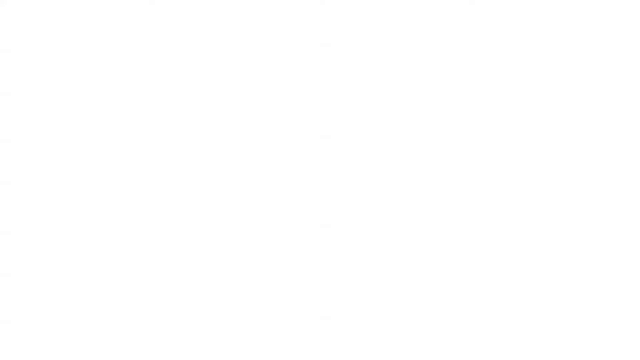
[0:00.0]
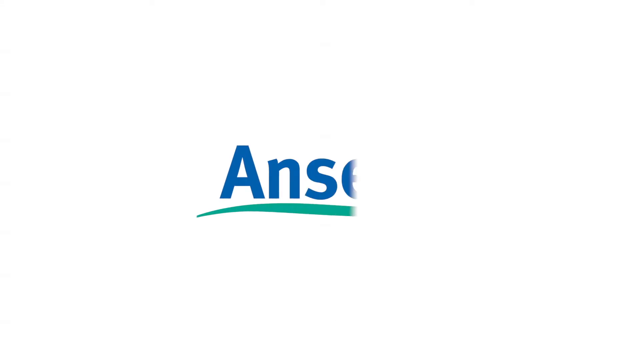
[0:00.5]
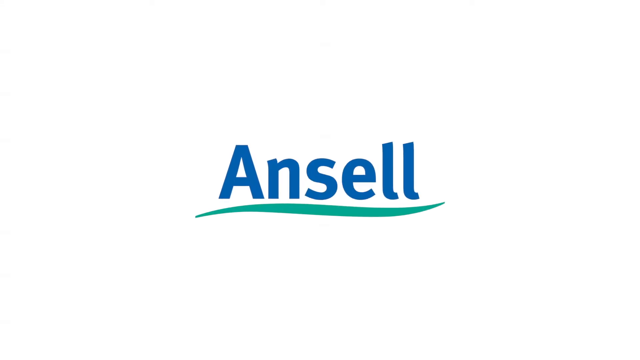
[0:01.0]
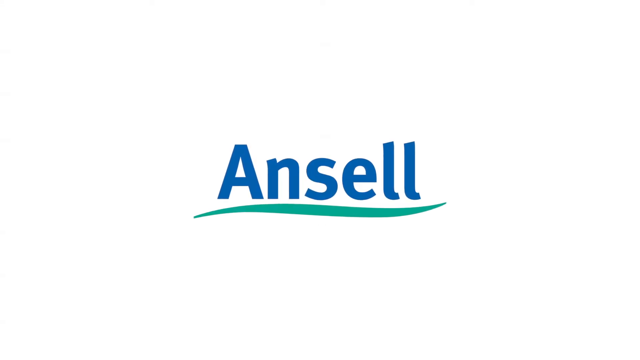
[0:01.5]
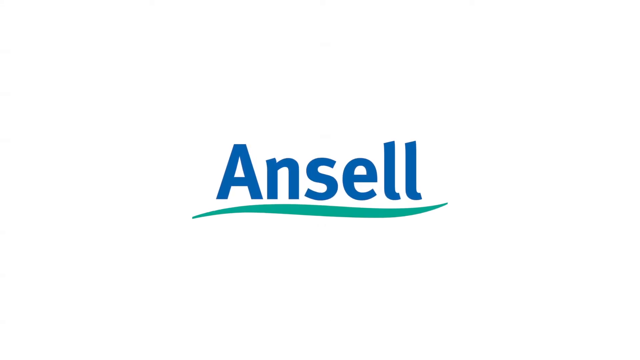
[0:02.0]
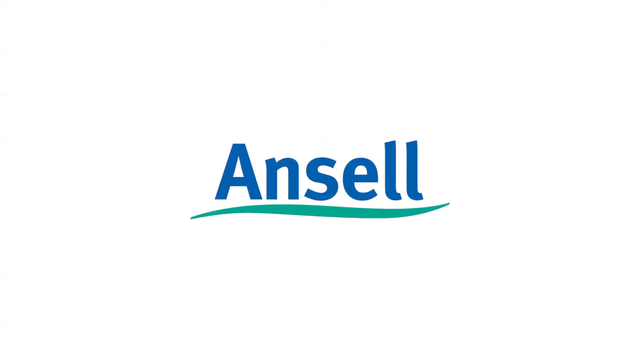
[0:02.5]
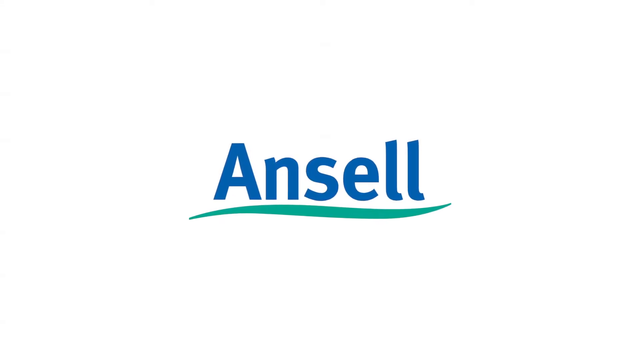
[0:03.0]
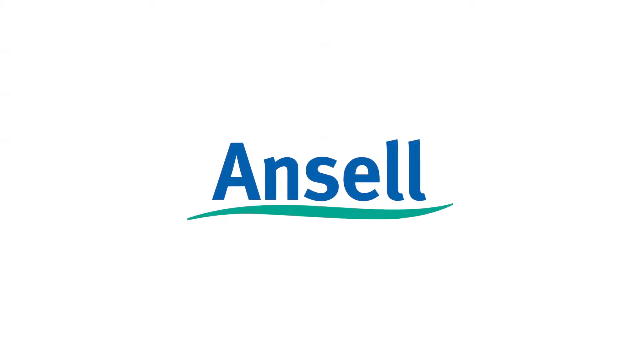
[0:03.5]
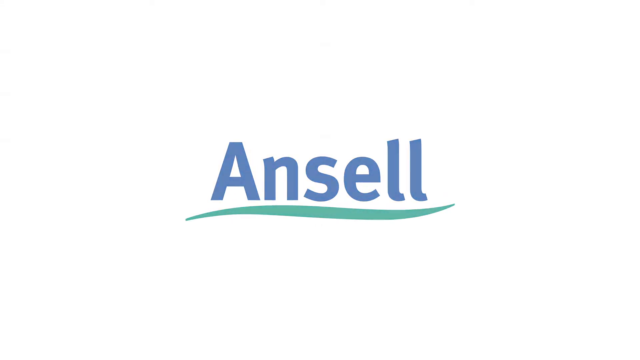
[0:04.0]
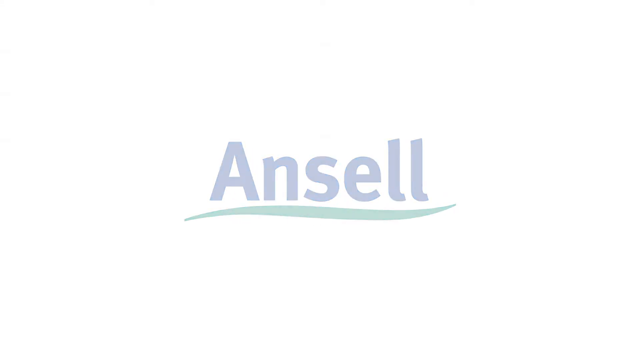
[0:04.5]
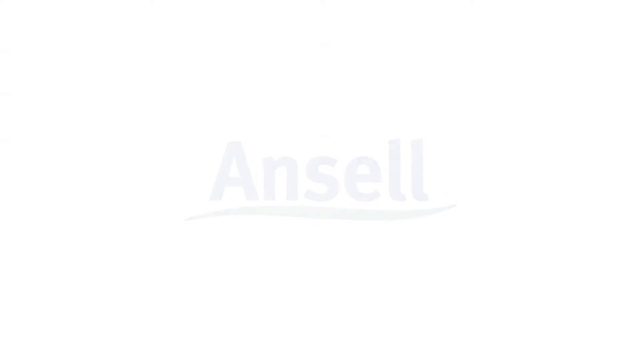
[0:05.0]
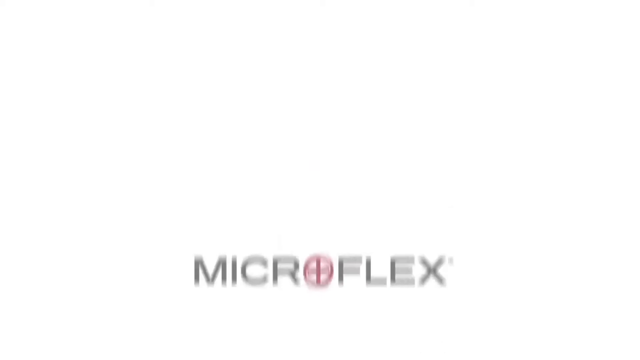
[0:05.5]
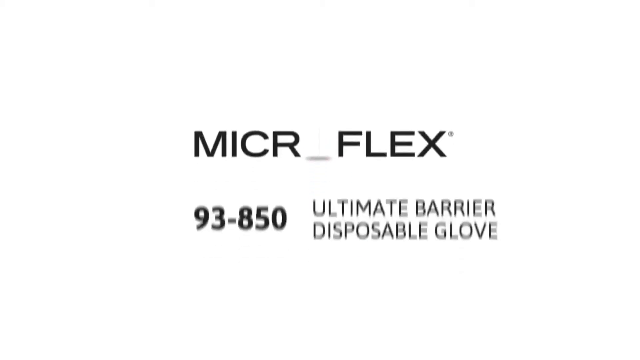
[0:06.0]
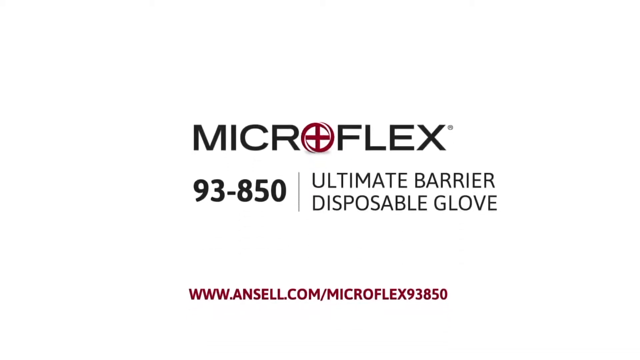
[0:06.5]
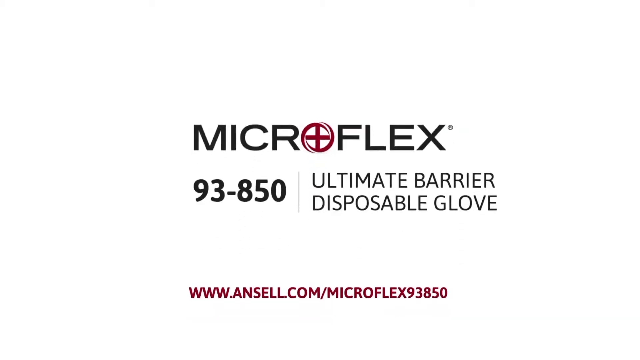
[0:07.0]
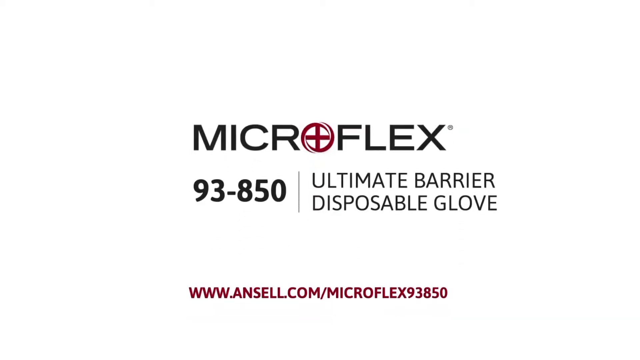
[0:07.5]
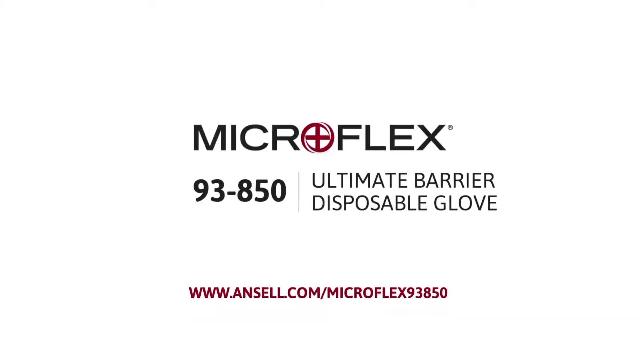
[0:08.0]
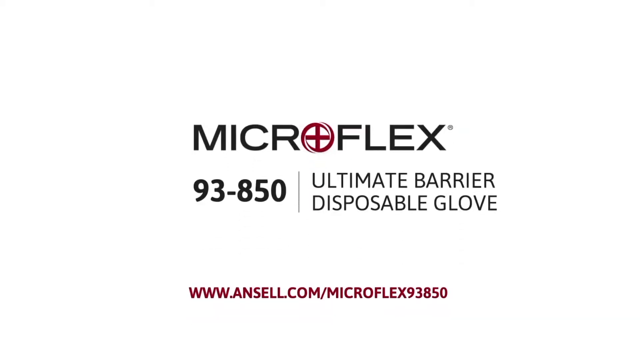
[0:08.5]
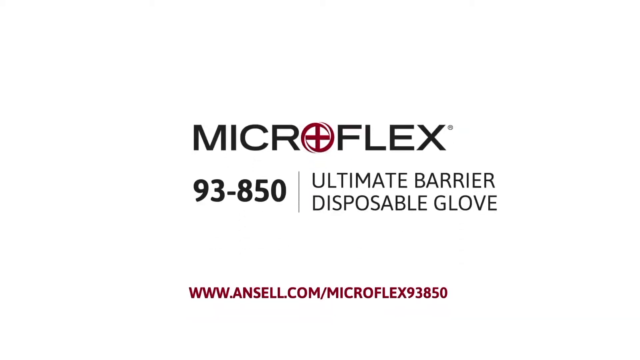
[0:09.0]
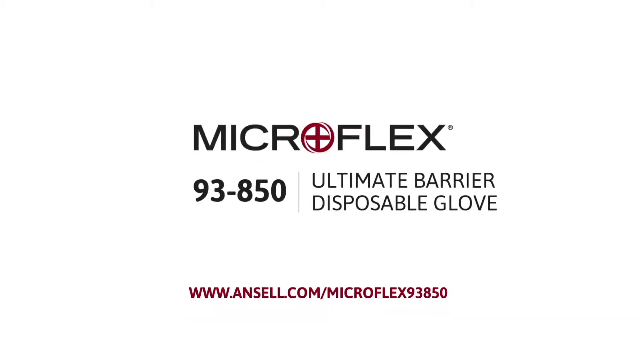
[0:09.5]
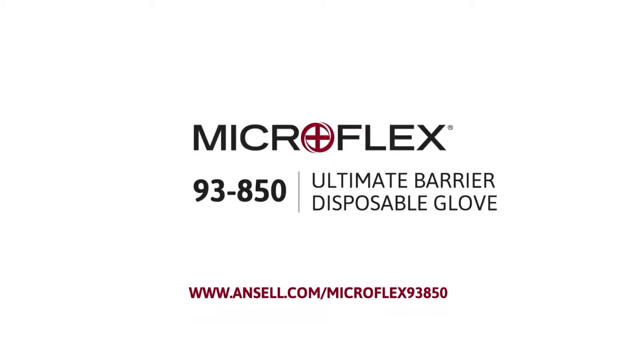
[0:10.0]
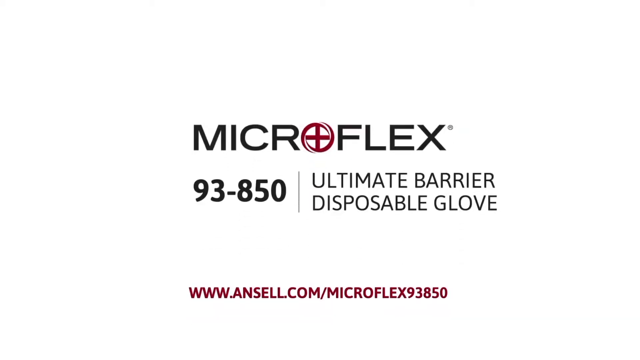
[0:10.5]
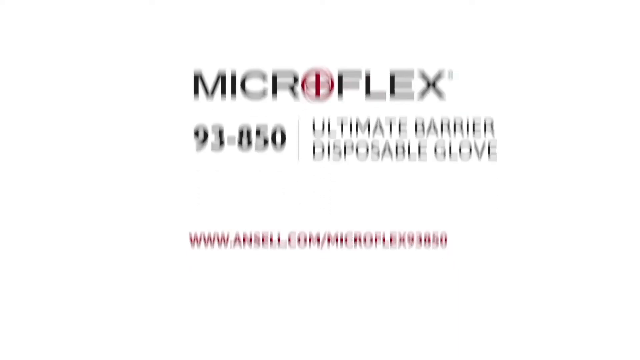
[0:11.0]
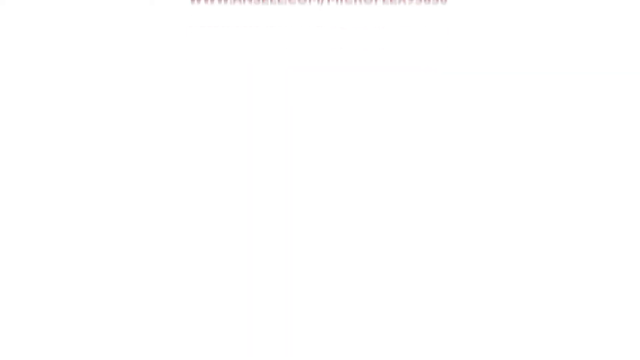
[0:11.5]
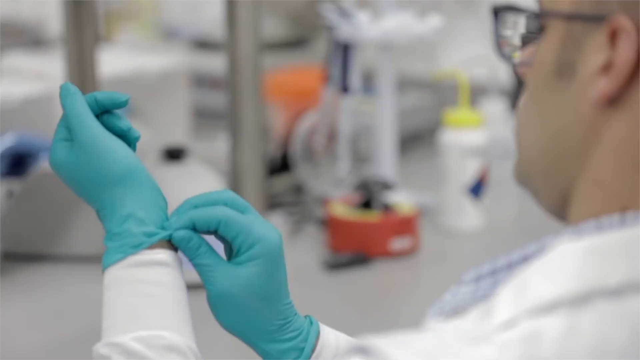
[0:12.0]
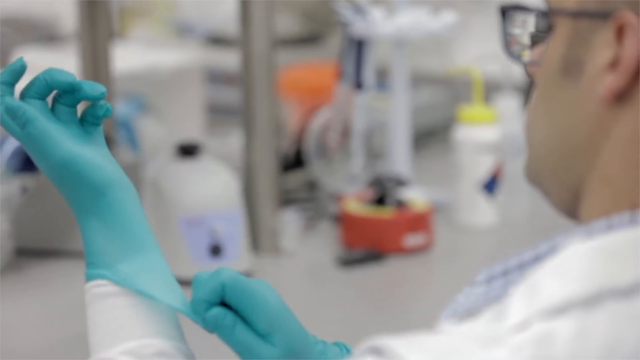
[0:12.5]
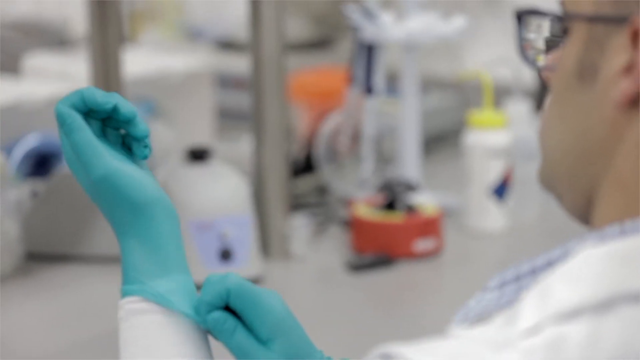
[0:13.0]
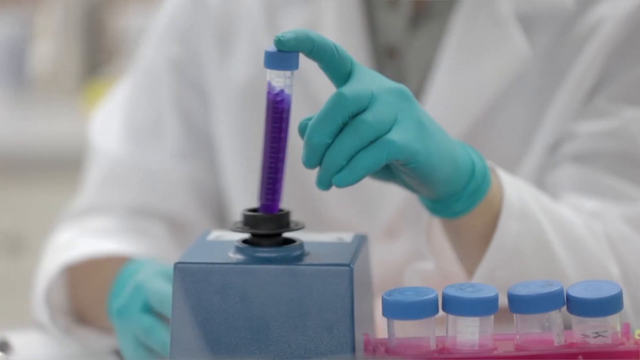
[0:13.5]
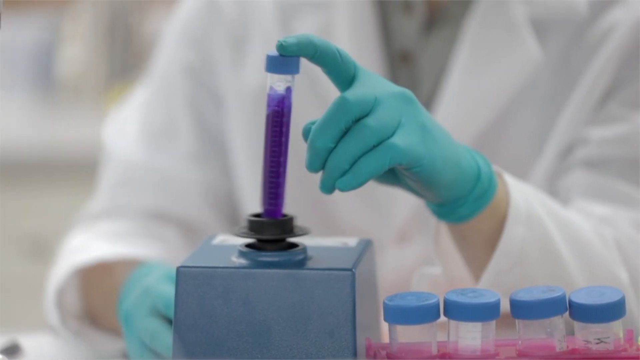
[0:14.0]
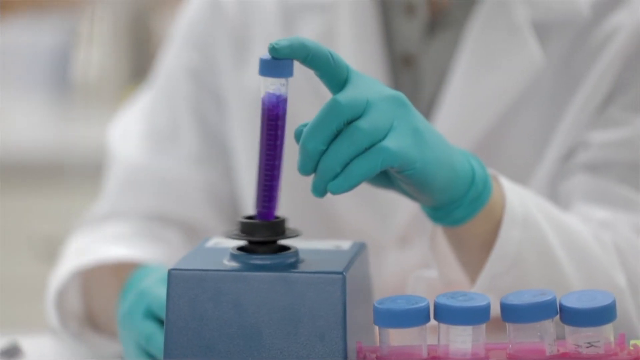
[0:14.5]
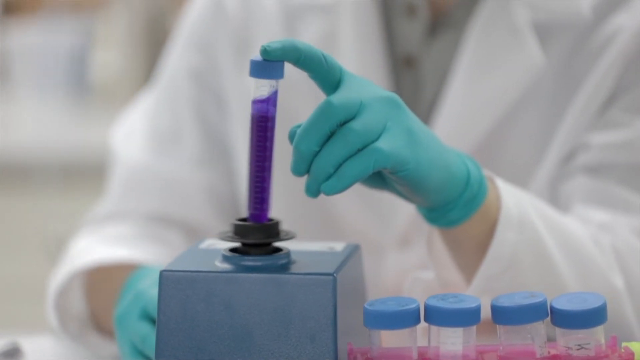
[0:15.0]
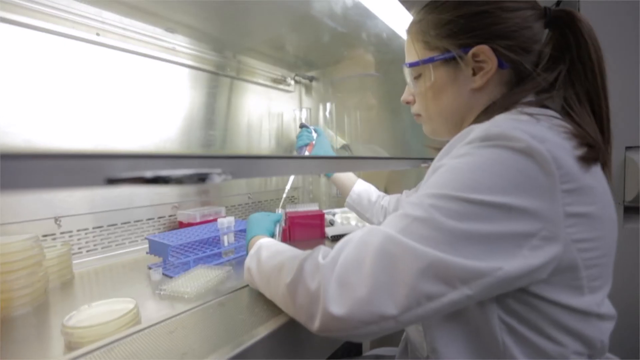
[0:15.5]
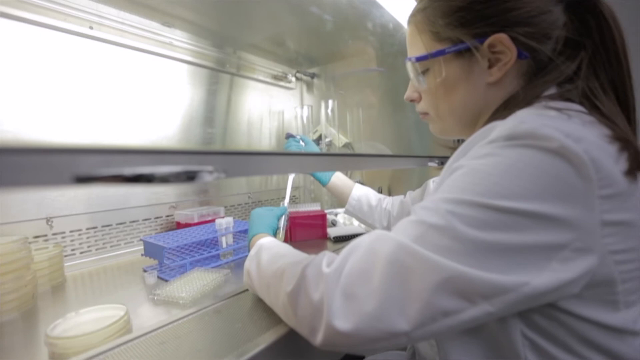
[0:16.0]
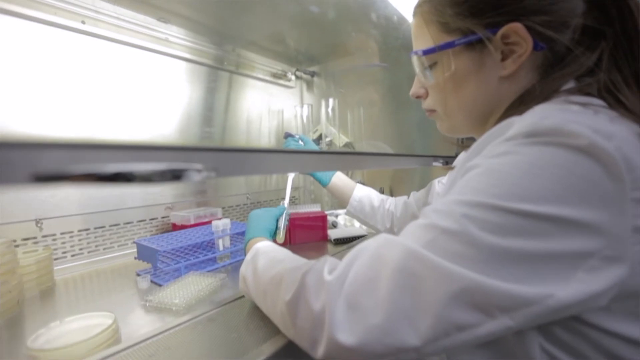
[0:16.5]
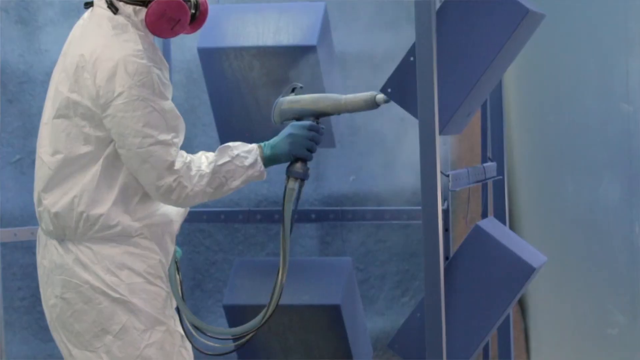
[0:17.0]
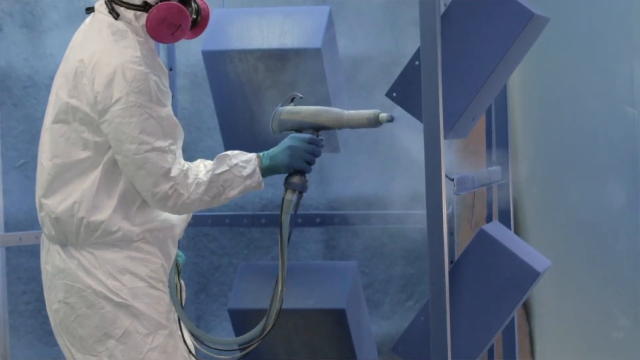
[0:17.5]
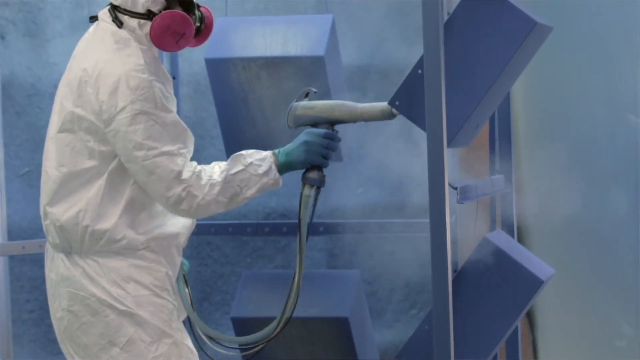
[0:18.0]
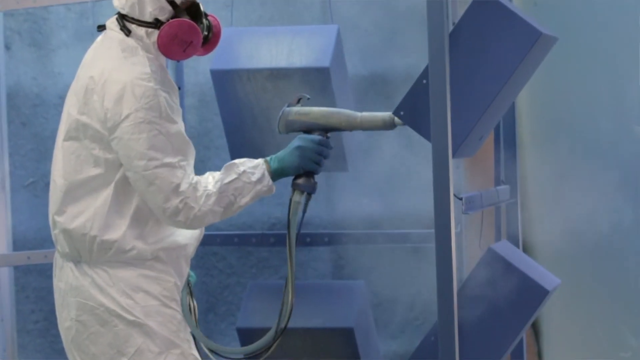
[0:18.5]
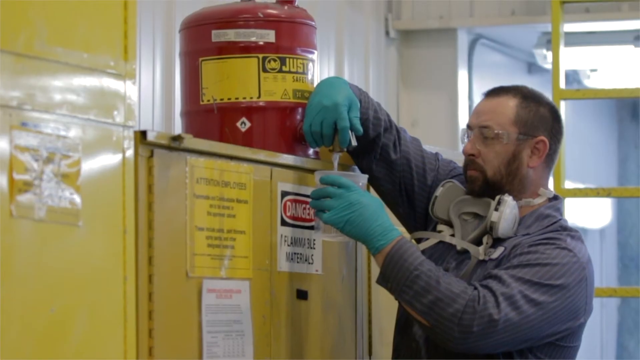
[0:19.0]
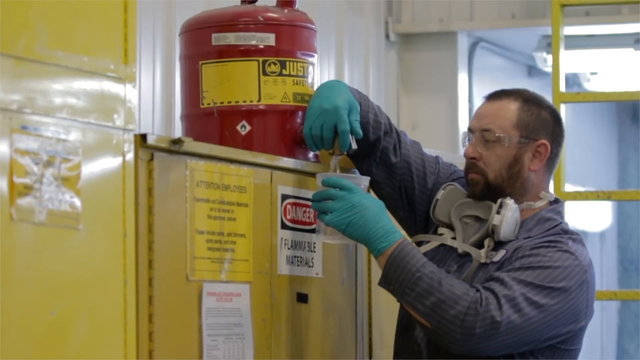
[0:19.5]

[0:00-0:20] The video opens with the word "Ansel" on screen, followed by text reading "microflex ultimate barrier disposable glove." It then cuts to footage of people in a laboratory or science environment, all wearing teal-turquoise latex gloves, apparently the Ansel brand 93-85 disposable gloves. Someone puts the gloves on and uses them in a lab to inject fluids into little beakers and test tubes. Another usage follows: someone wearing a full face mask appears to be almost spray painting something while wearing the gloves, moving the setting from a laboratory to an industrial one. Then someone pours chemicals into a cup in what looks like almost a locker room setting, with a yellow locker below the chemicals; the person wears a gray zip-up onesie kind of outfit.